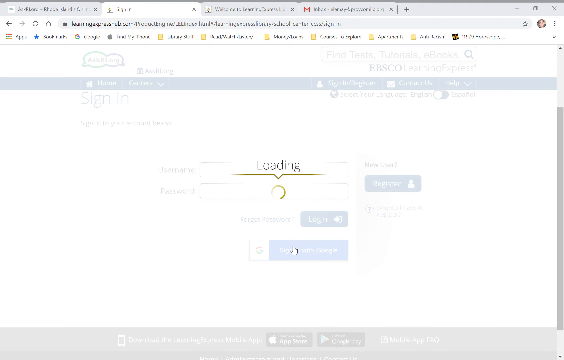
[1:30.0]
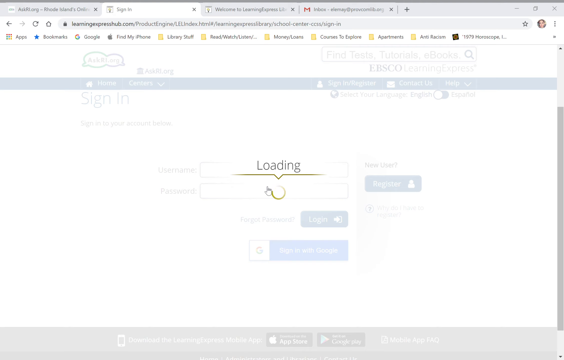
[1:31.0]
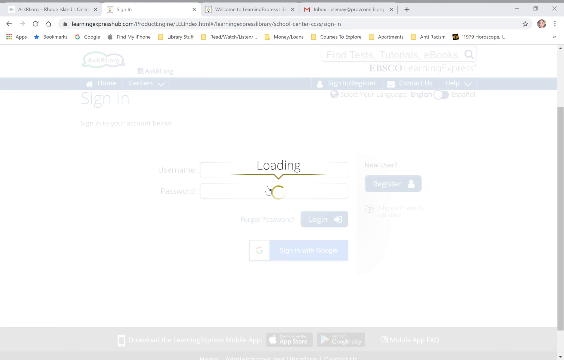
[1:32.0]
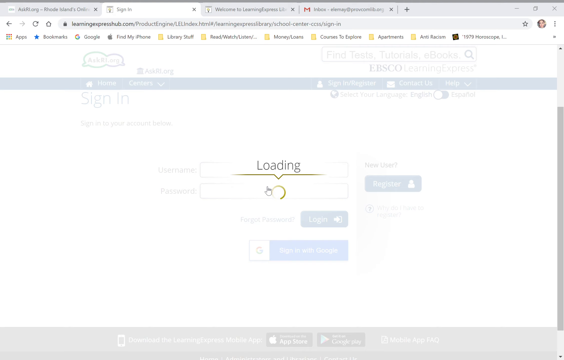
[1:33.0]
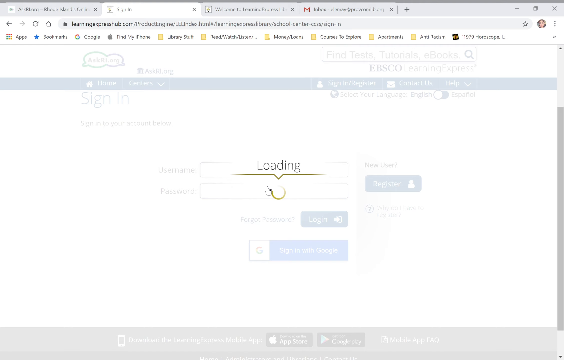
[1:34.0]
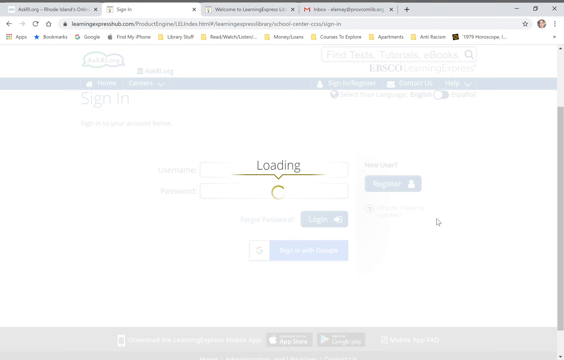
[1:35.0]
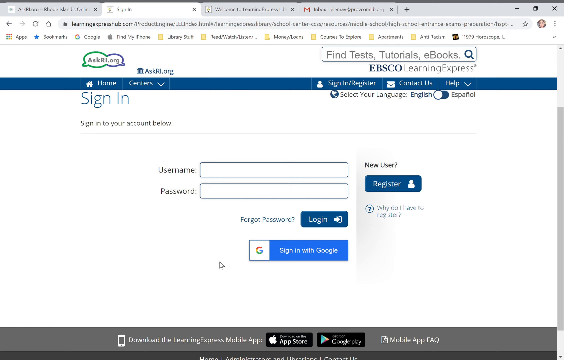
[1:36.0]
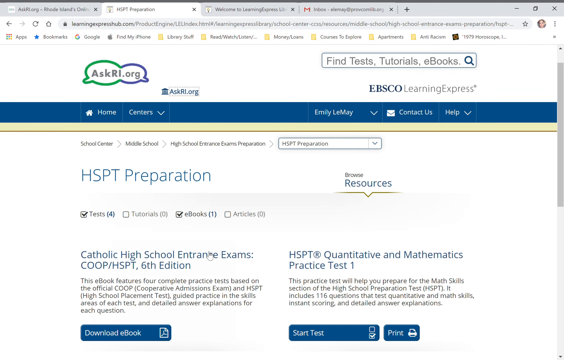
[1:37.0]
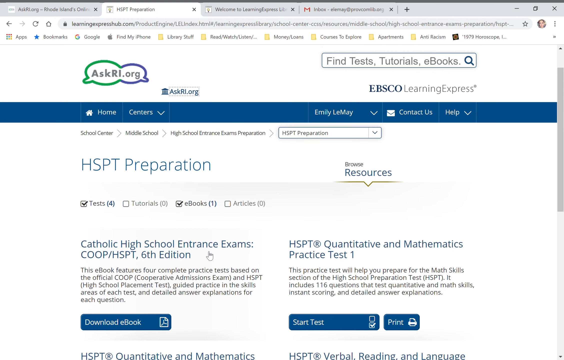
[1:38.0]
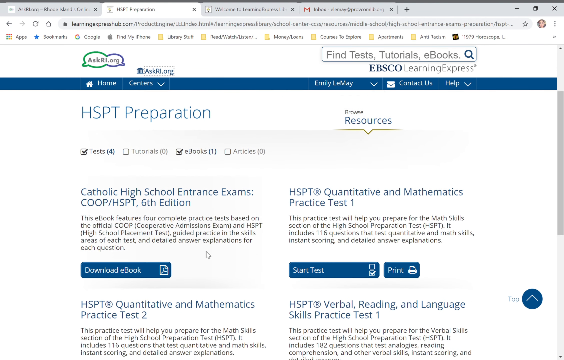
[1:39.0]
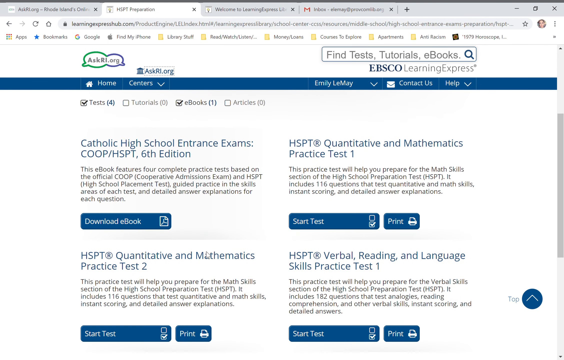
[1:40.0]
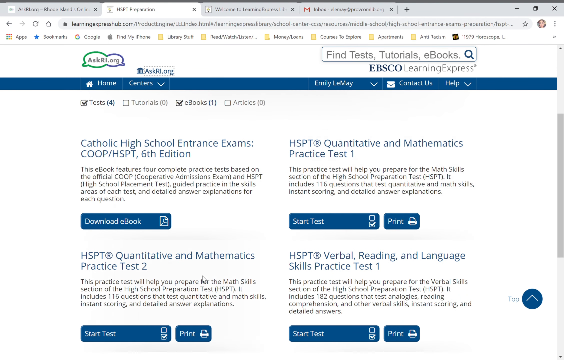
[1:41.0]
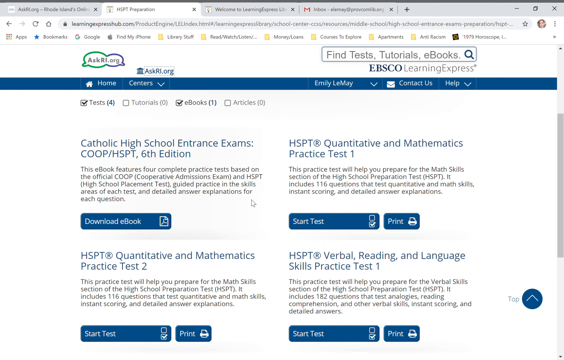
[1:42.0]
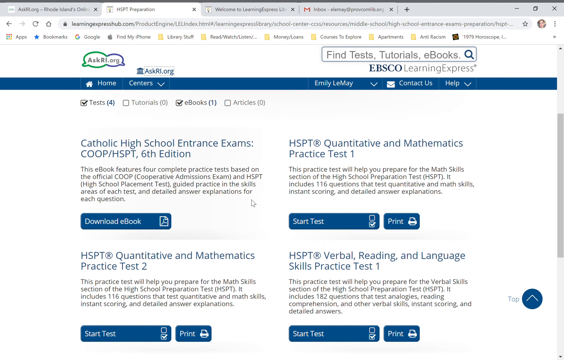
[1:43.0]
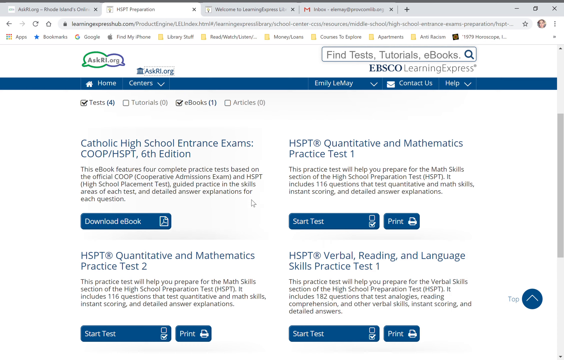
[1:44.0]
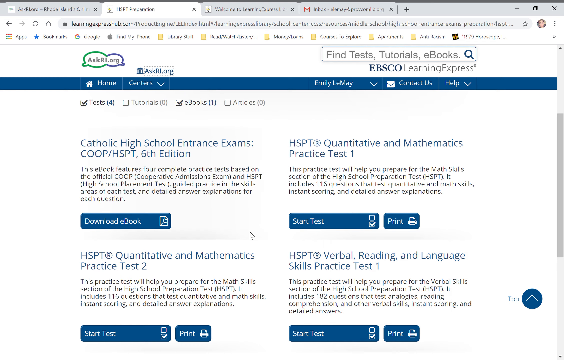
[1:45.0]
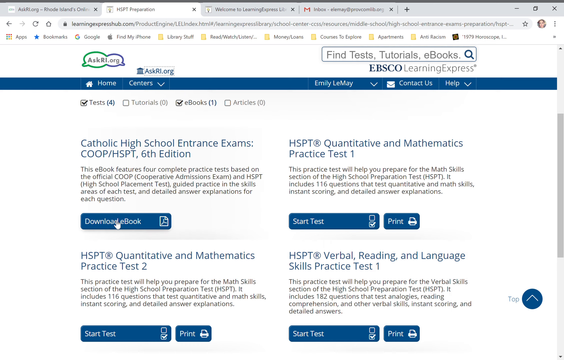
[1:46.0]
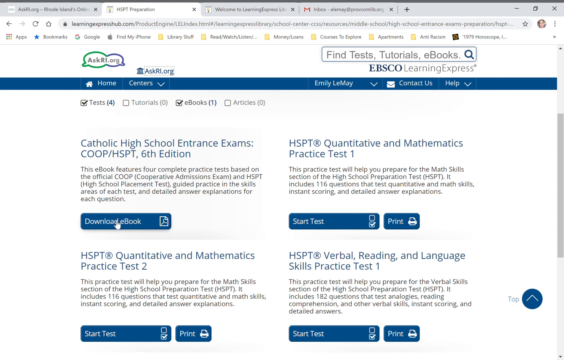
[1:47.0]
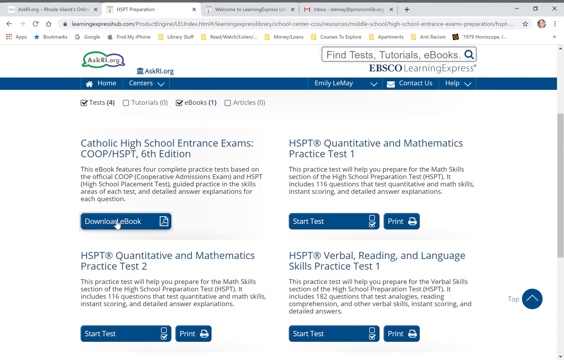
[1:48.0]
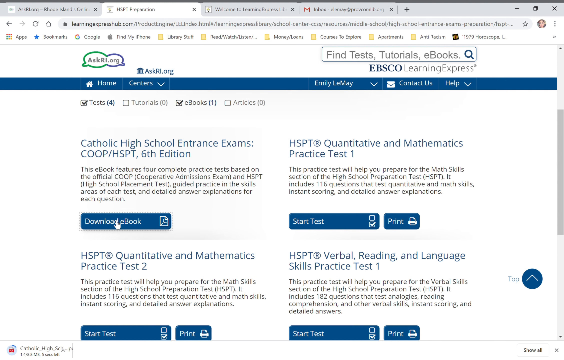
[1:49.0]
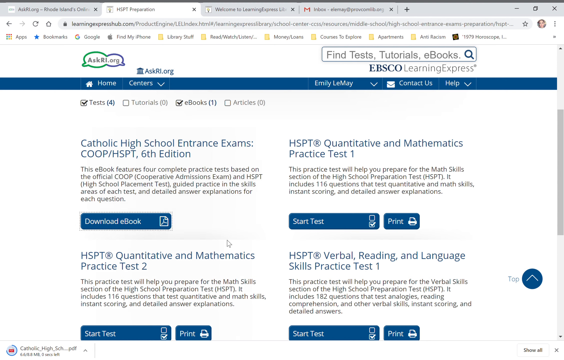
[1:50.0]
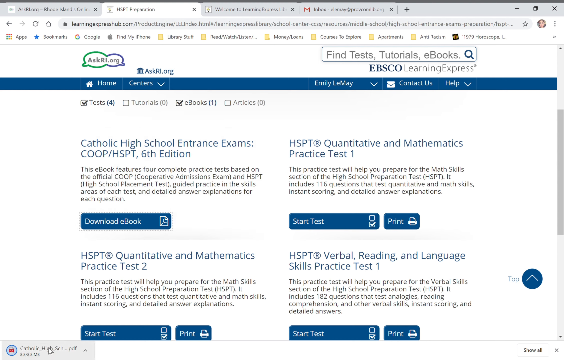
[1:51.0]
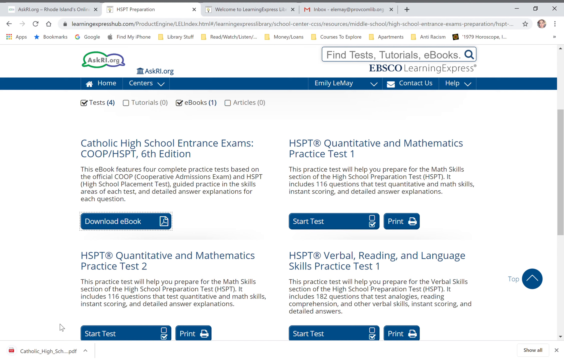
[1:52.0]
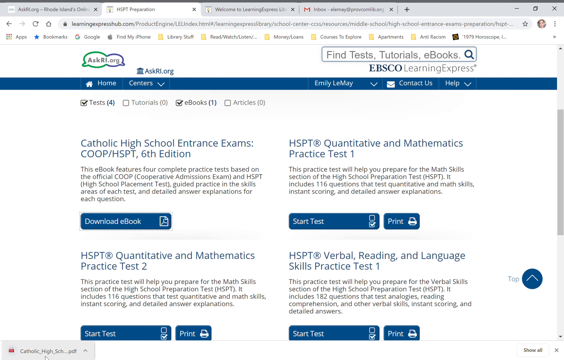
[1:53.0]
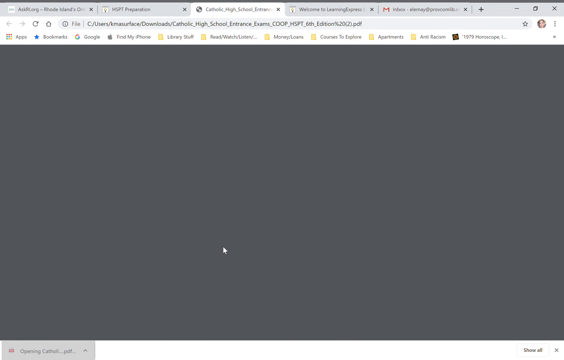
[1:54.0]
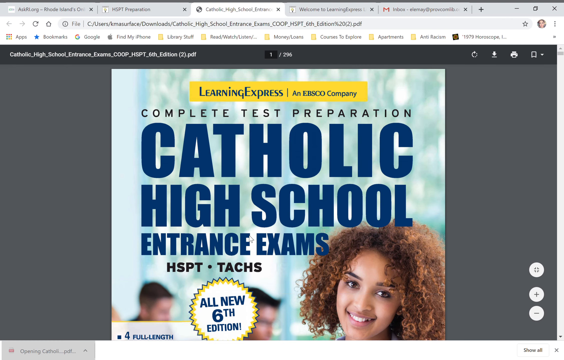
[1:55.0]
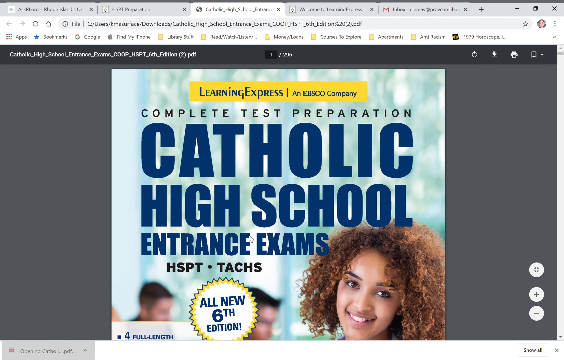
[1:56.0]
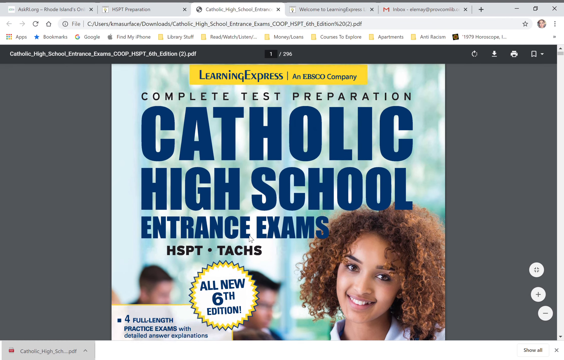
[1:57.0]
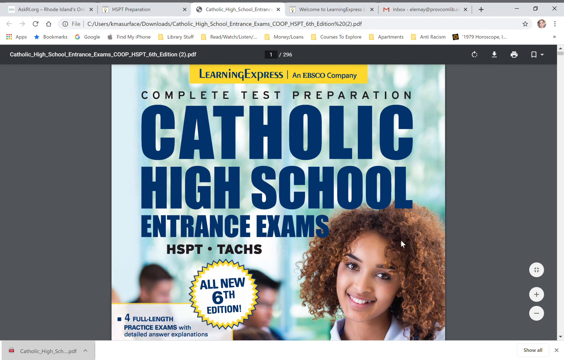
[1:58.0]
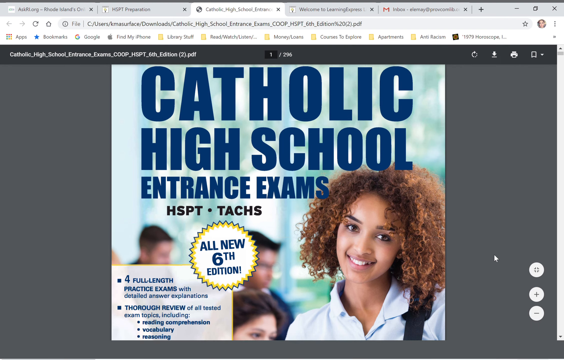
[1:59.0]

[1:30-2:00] The loading screen shows the word "loading" in black, a little yellow line underneath, and a loading circle, with the cursor hovering over the circle. The cursor moves to the right and the page returns to the sign-in page for signing into an account. It then goes back to the HSPT preparation page listing the different entrance exams. The cursor scrolls around toward the middle of the page, returns to the Catholic high school entrance exam COOP/HSPT 6th edition, and goes to the e-books, where the e-book is downloaded. A different tab opens, a PDF tab showing the cover of a complete test preparation book for Catholic high school entrance exams, 6th edition. On the right side of the cover there is an African American girl with short curly hair down to her shoulders, her head tilted to the left, smiling at the camera.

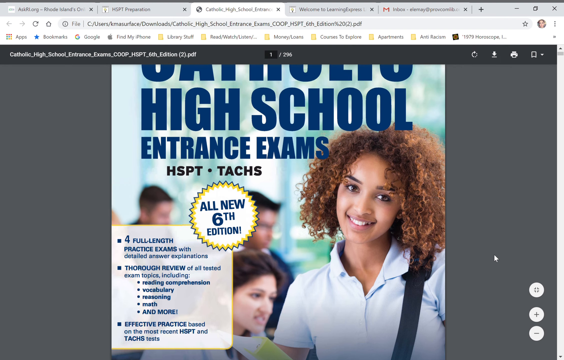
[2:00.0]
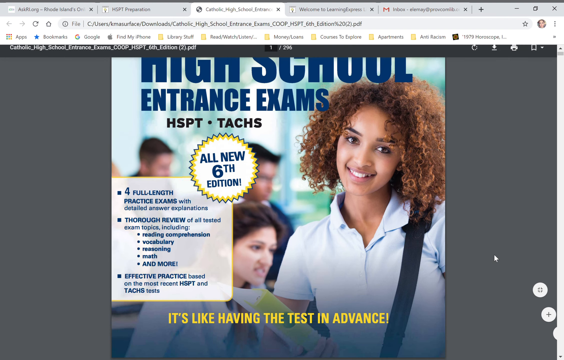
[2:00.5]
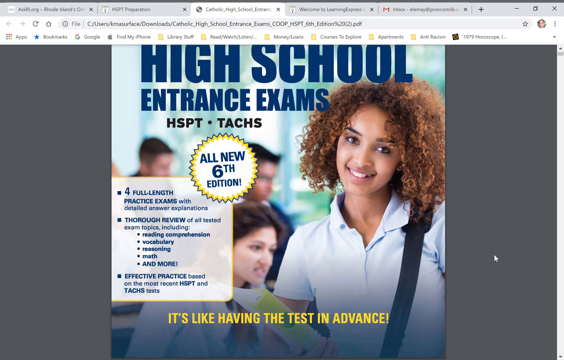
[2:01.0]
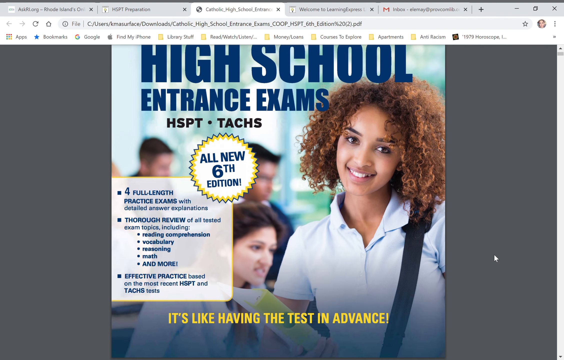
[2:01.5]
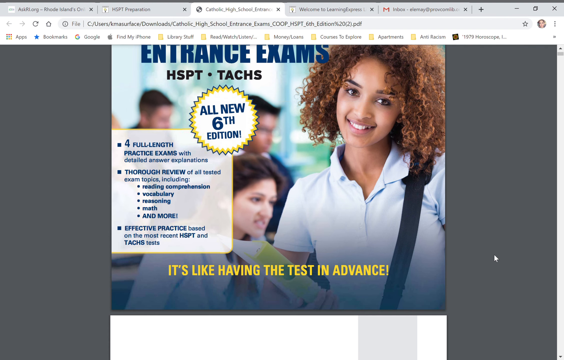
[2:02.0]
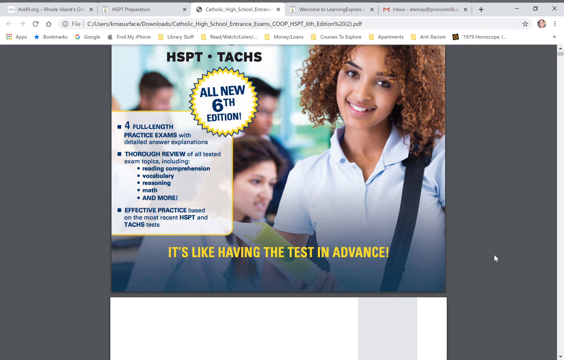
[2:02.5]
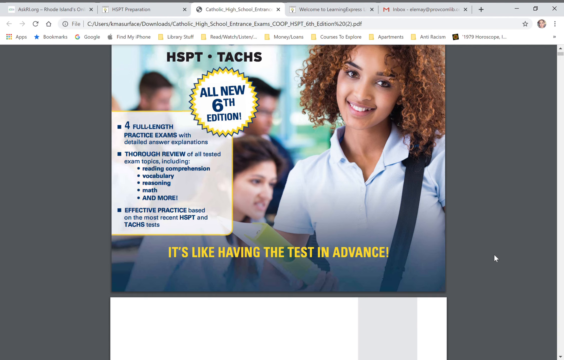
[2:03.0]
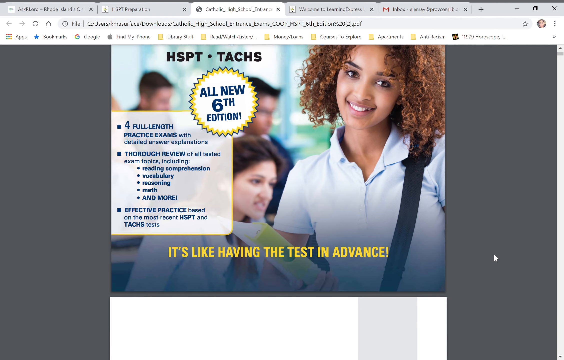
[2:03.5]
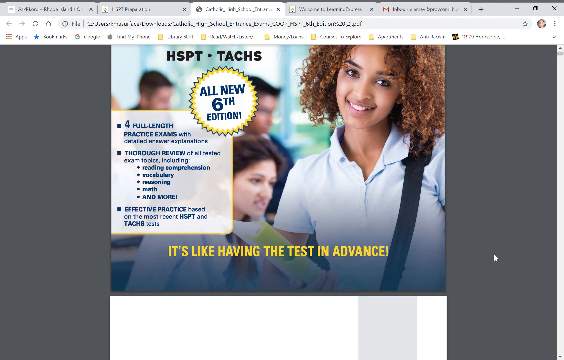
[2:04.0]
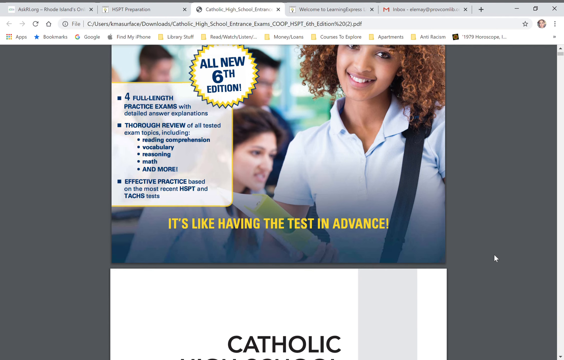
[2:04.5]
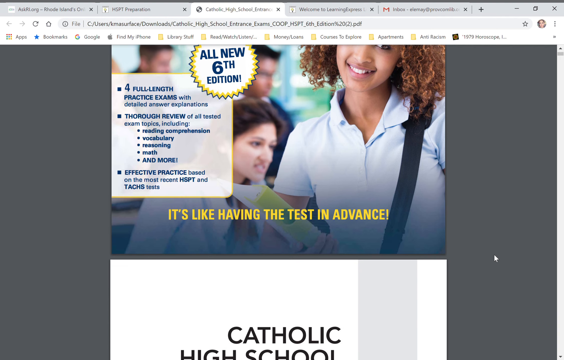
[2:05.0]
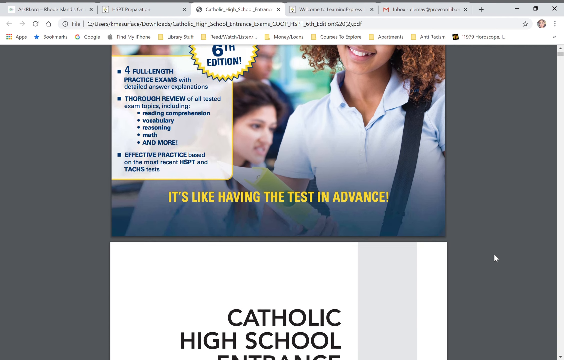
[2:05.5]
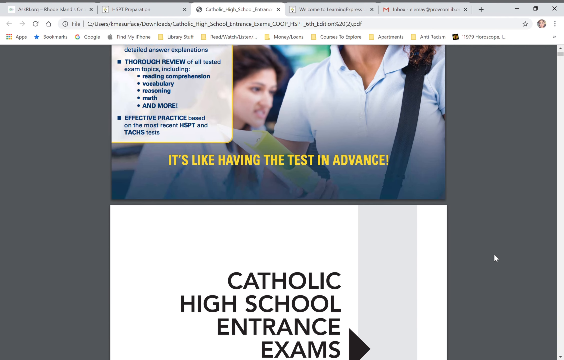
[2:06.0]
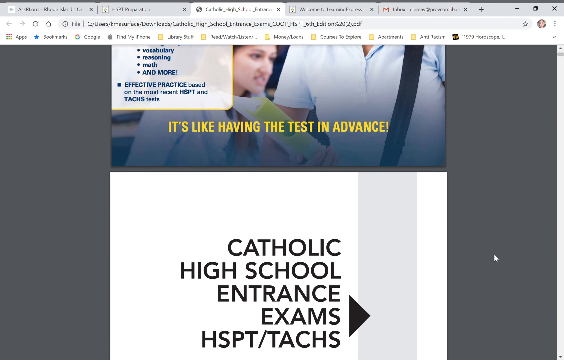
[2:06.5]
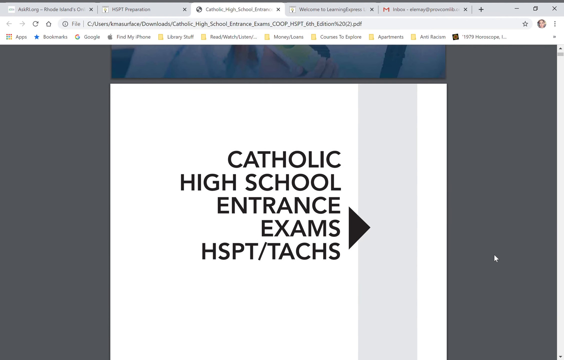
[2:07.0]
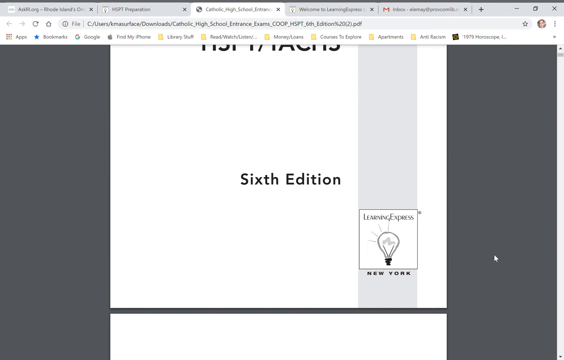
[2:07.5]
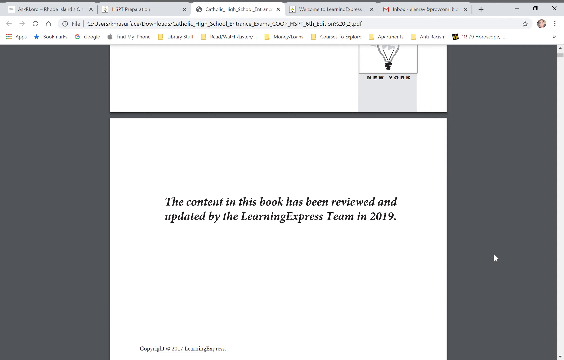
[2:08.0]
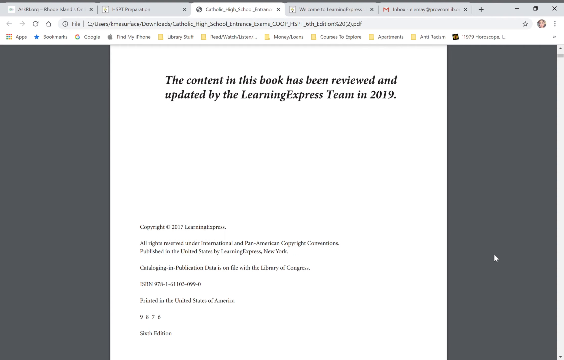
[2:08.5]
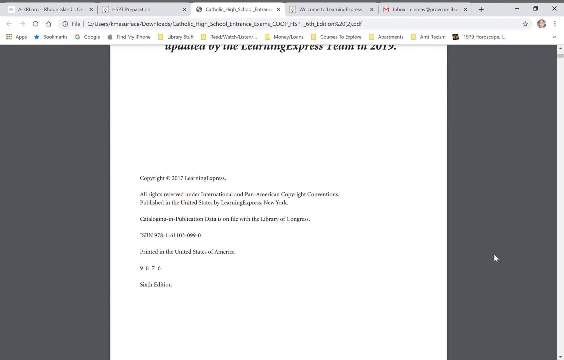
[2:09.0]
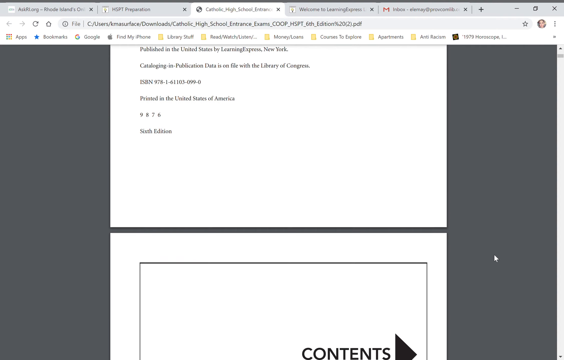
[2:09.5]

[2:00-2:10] The PDF of the Catholic high school entrance exams book scrolls down, revealing text that says "four full-length practice exams with explanation", "thorough review of tested exam topics, including" followed by five different topics, and "effective practicing using the most recent HSPT and TACS test". At the bottom of the front page it says "it's like having the test in advance". Scrolling down reveals a page with "Catholic high school entrance exams, HSPT, TACS, six edition", a small publisher logo, and Learning Express New York. The third page says "the content in this book has been reviewed and updated by the Learning Express team in 2019" and has a copyright of 2017 Learning Express. The next page shows the contents.